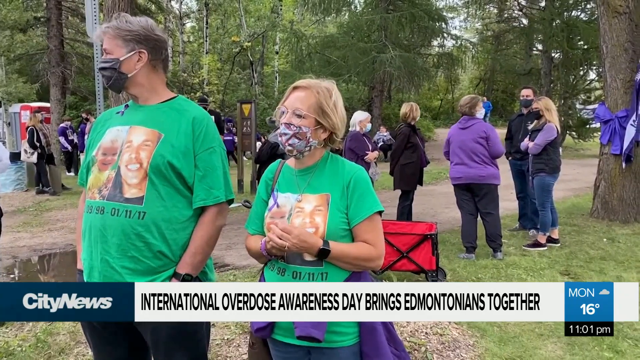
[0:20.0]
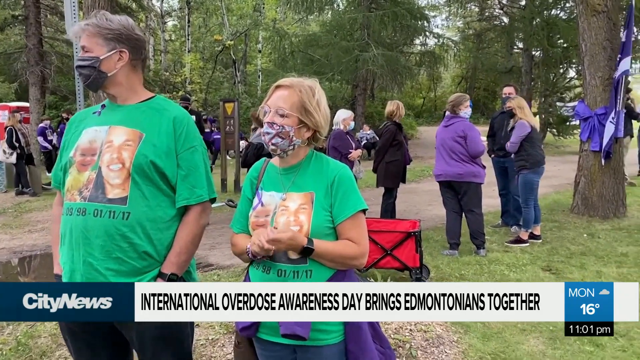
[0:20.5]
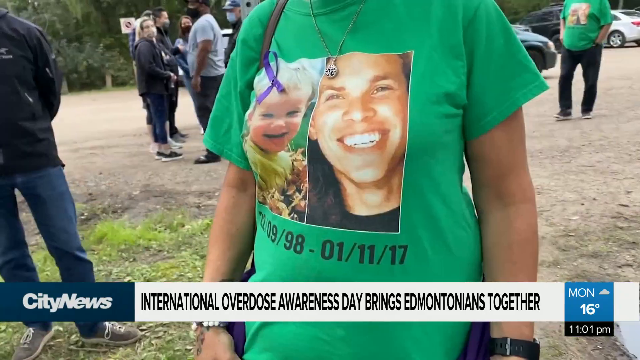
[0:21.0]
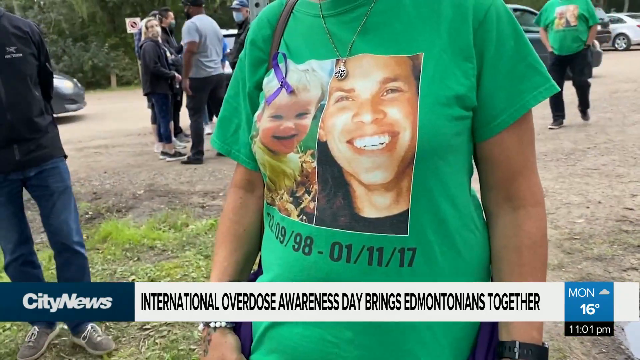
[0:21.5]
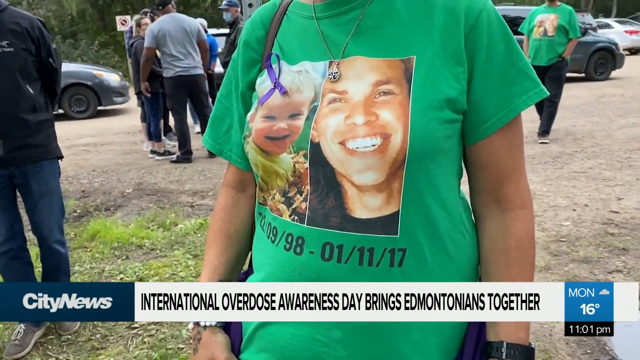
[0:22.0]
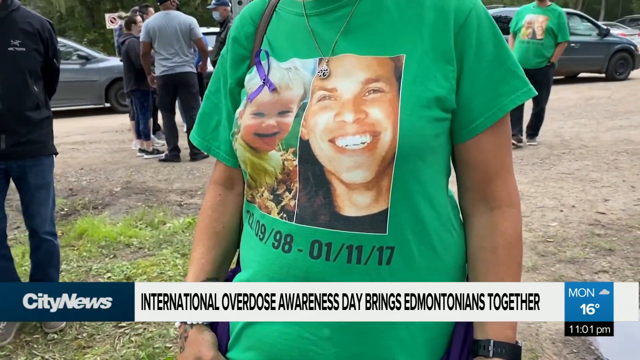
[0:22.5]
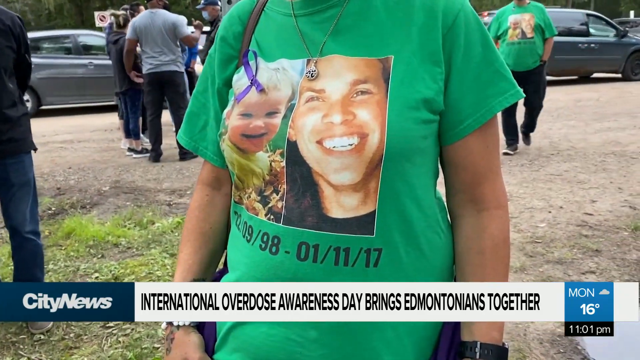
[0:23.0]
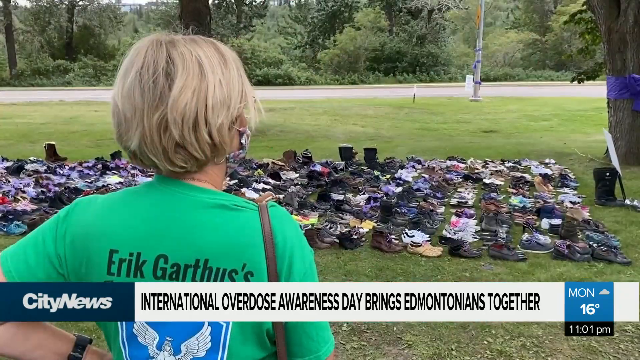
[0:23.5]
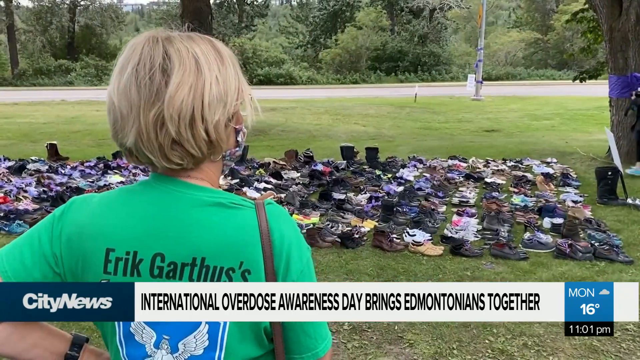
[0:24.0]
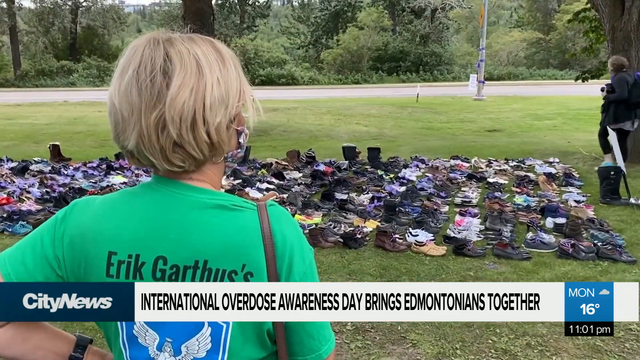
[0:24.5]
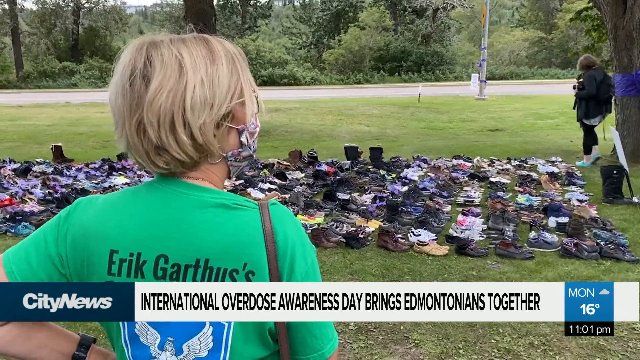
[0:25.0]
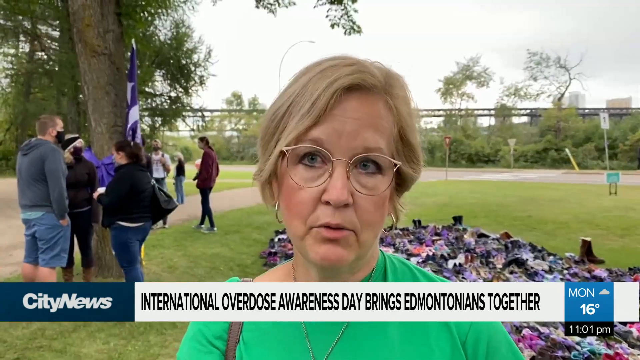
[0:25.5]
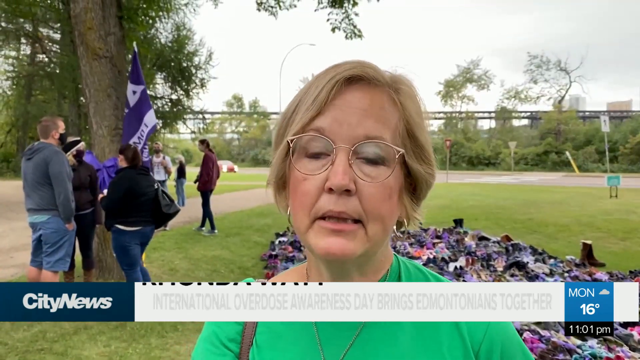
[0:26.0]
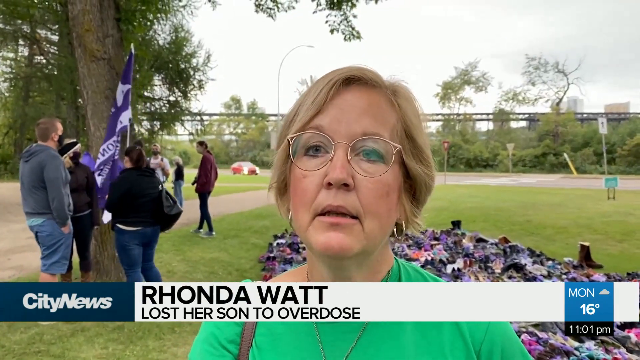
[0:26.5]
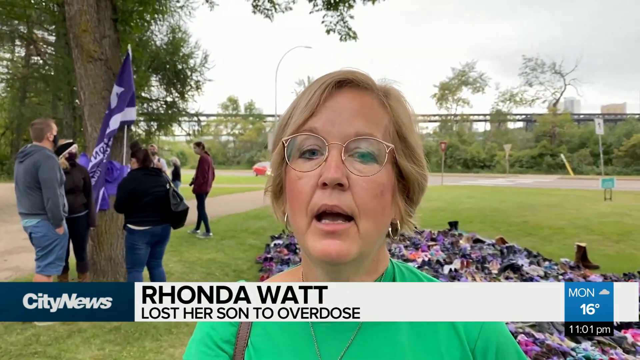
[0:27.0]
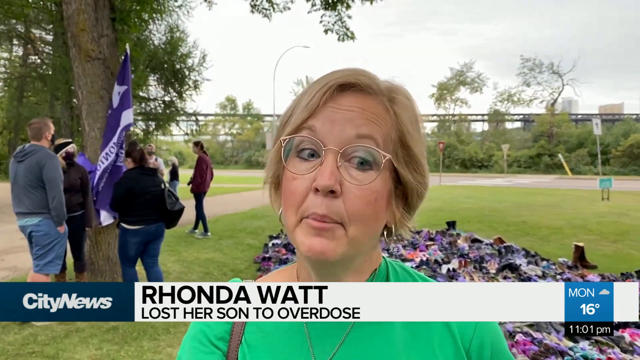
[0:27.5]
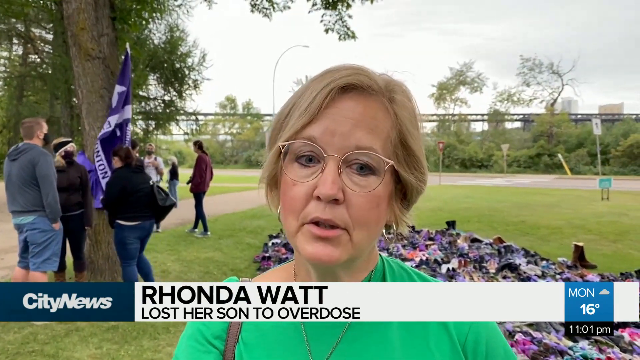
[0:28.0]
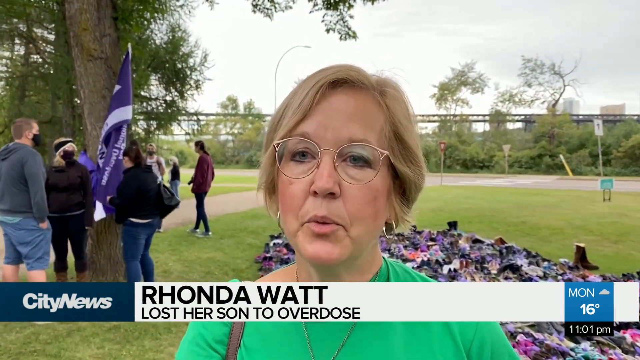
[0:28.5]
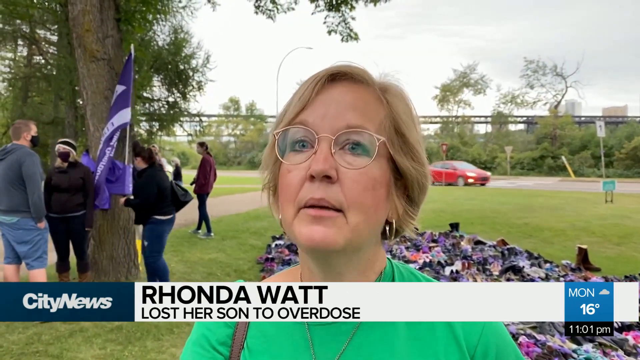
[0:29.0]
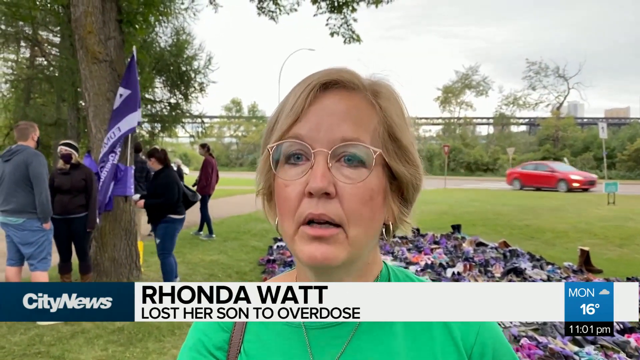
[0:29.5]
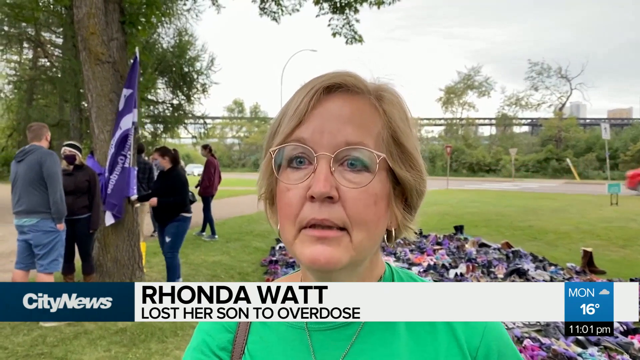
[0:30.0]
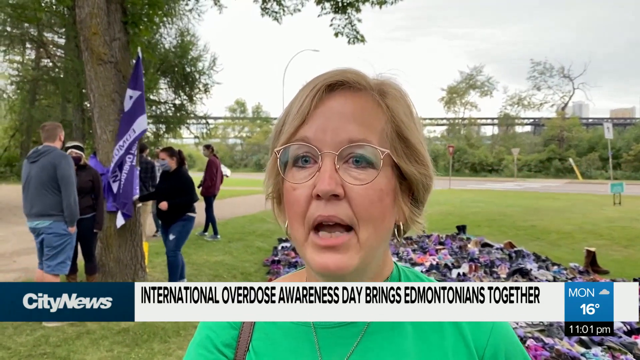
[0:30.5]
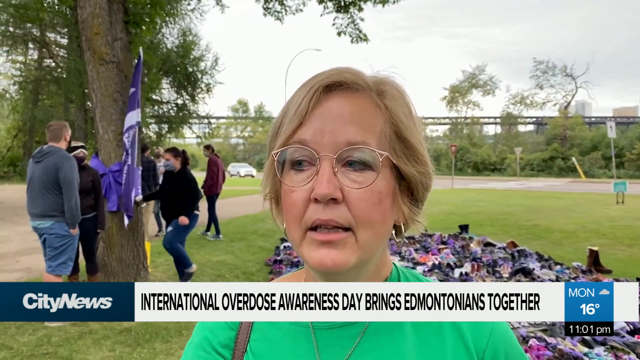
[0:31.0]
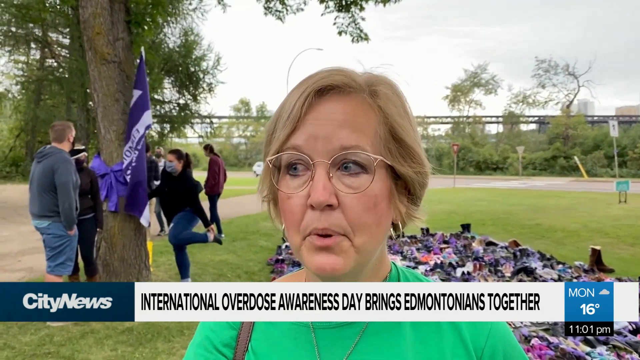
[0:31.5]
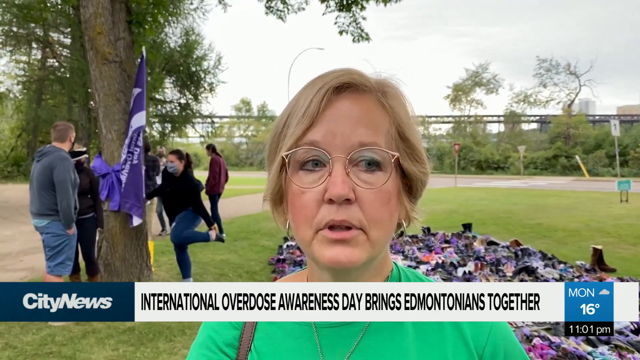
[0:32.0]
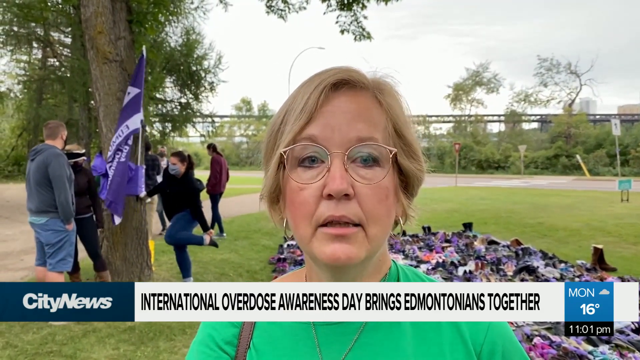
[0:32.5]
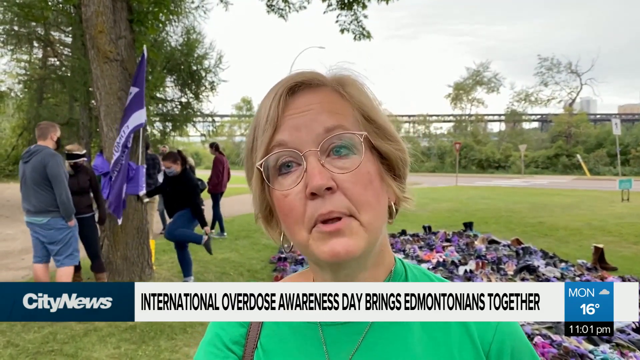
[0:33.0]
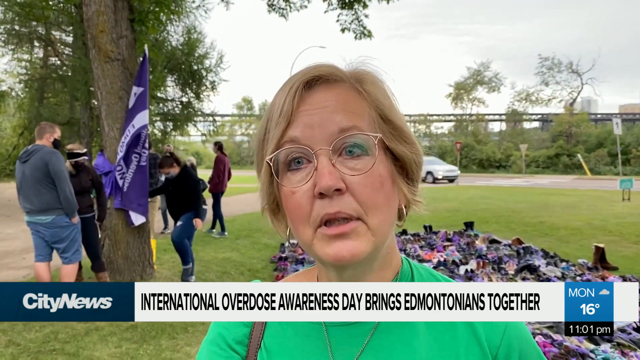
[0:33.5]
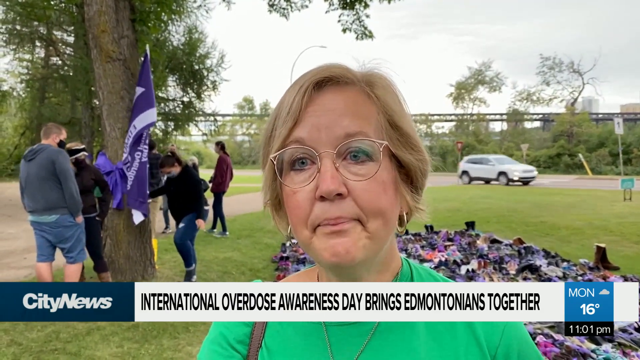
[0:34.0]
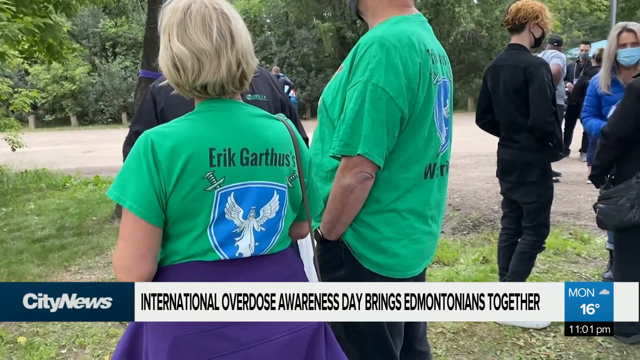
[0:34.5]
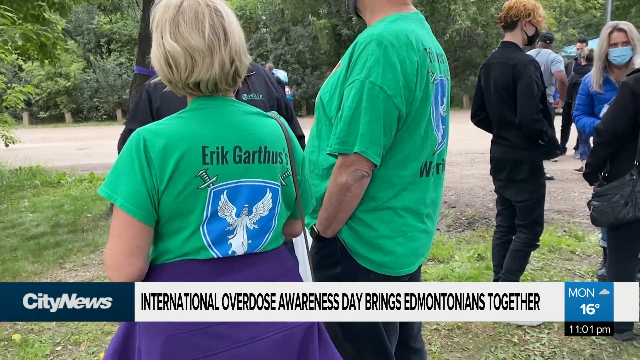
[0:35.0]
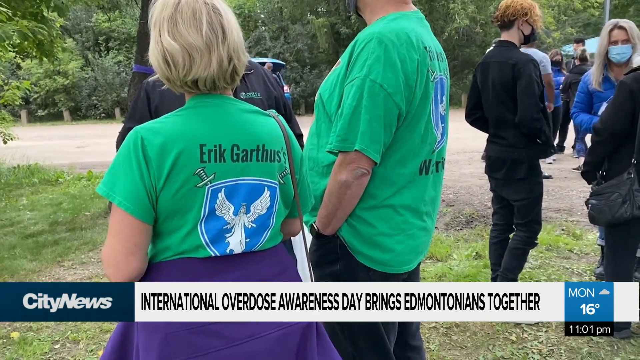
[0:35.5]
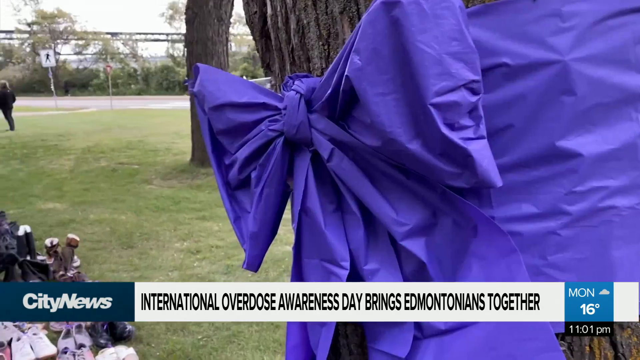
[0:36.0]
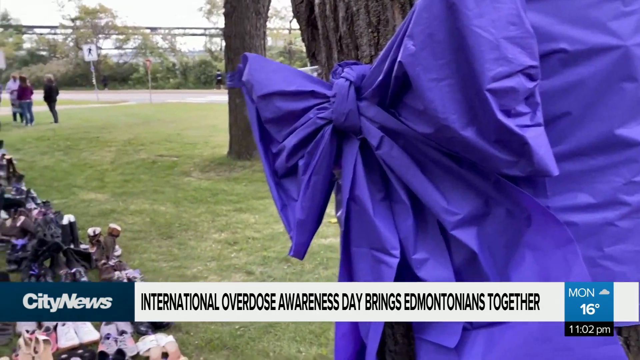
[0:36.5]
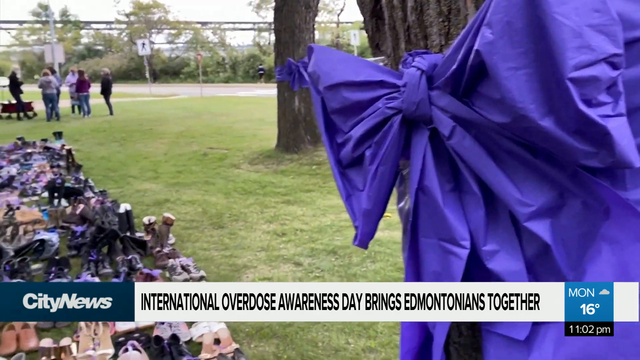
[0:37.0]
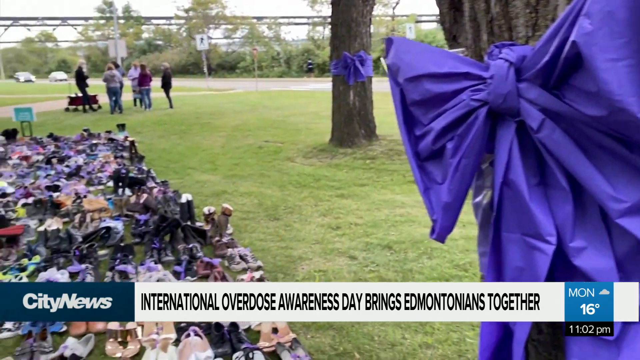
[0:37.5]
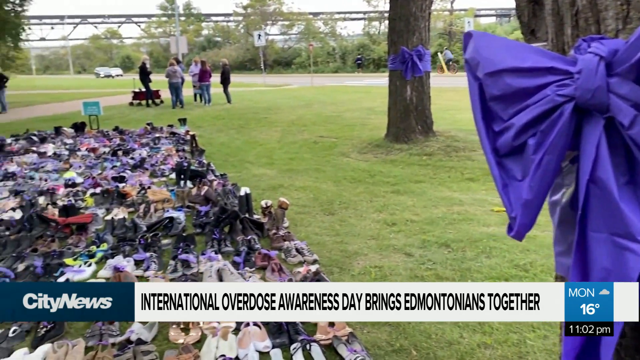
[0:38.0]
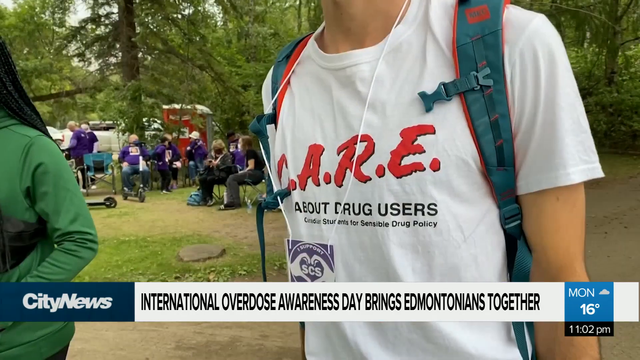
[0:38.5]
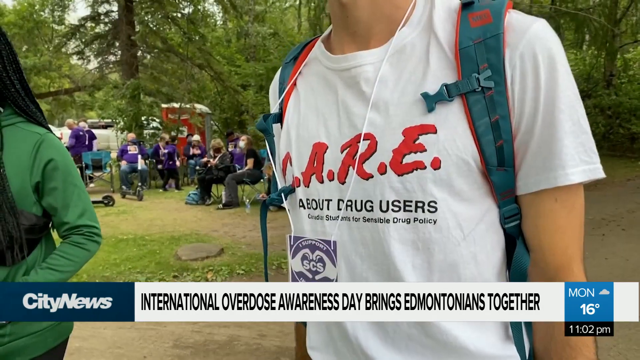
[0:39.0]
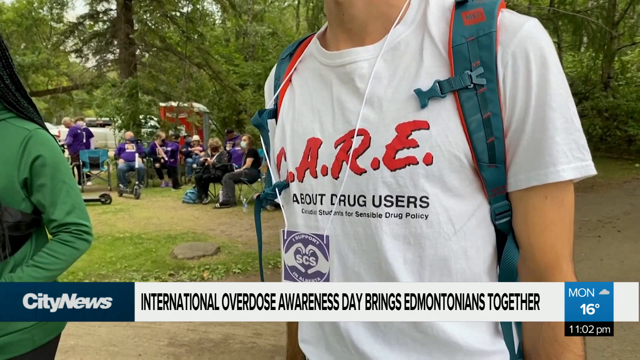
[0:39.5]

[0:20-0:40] The camera focuses on a person's t-shirt, with the head and lower body out of view. The person wears a green t-shirt with two pictures printed on it, a woman and a child, and below them some figures that are apparently dates. In the background, people are standing and there are vehicles around. A lady stands facing away from the camera, wearing a green t-shirt, and there are more shoe collections. A woman in a green t-shirt faces the camera and talks. Behind her, people and vehicles are moving. A collection of shoes is arranged in a line. Some people are next to a tree holding something like a flag in purple, and some of them are dressed in black.